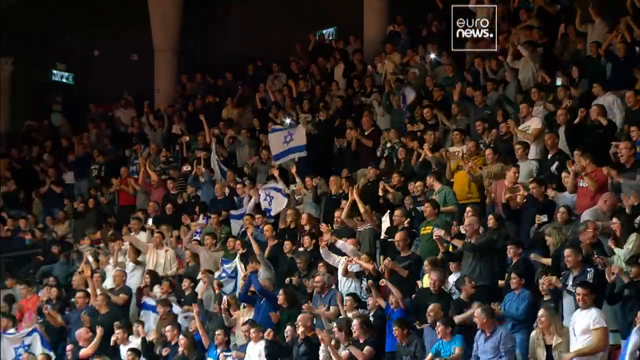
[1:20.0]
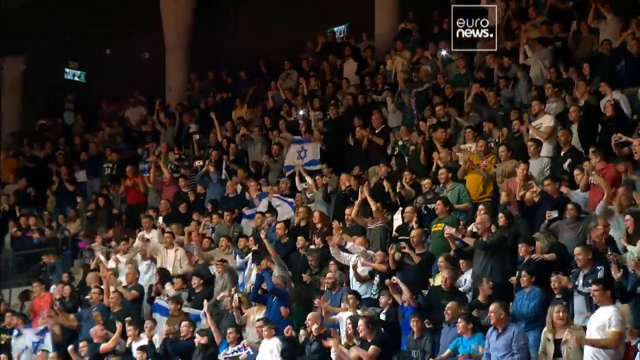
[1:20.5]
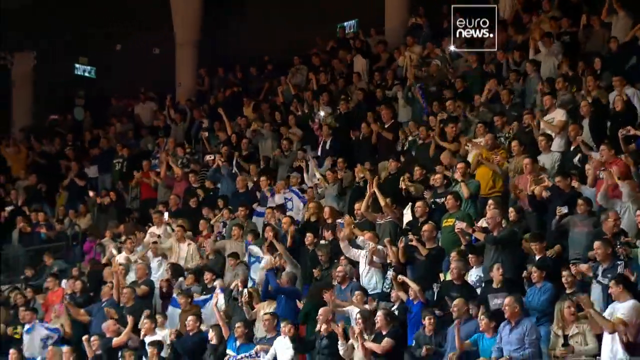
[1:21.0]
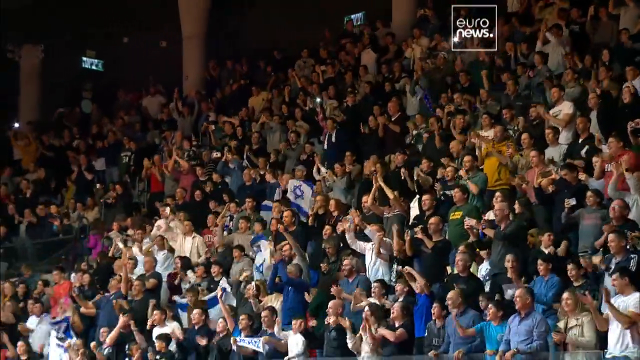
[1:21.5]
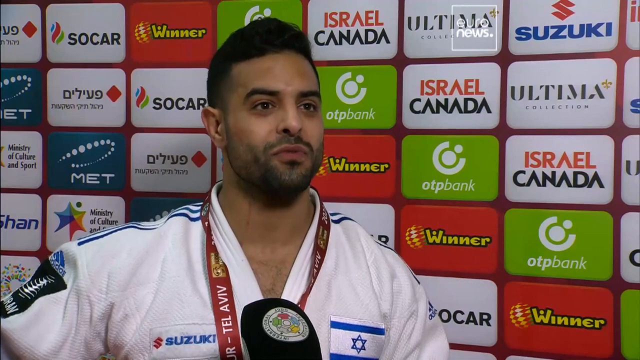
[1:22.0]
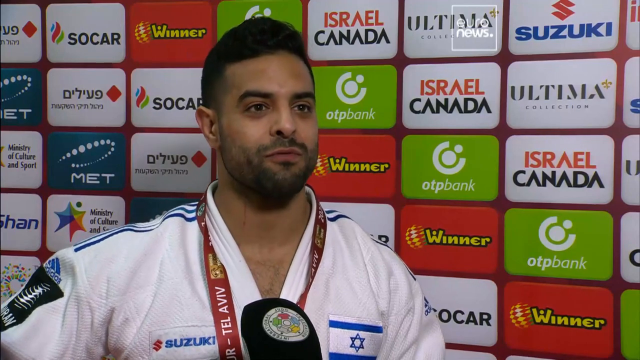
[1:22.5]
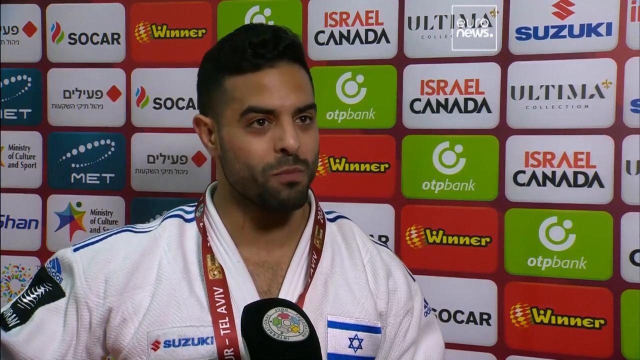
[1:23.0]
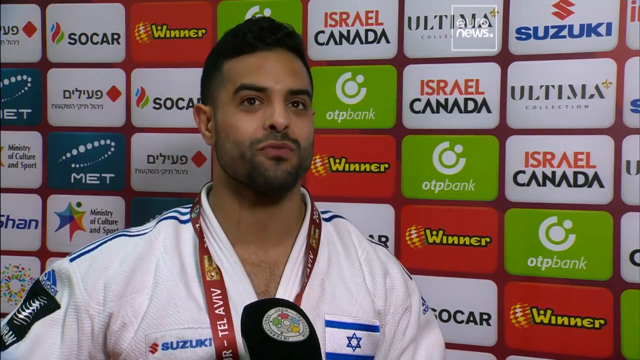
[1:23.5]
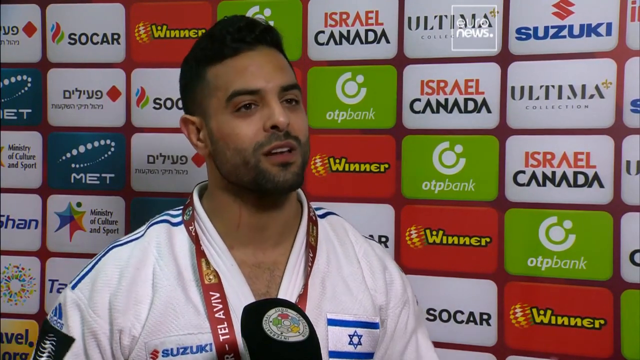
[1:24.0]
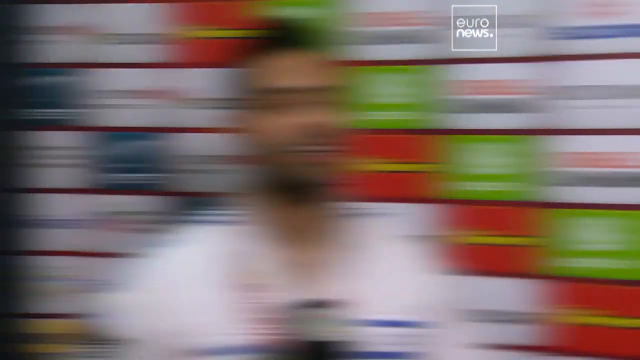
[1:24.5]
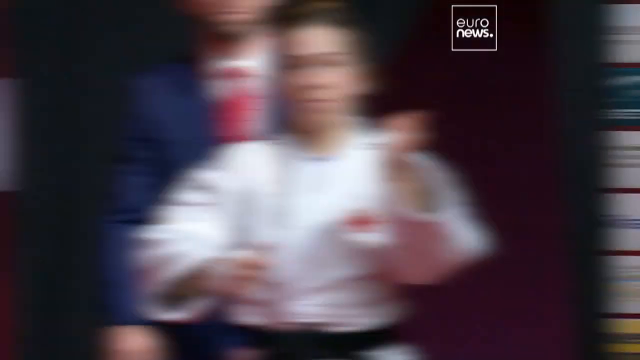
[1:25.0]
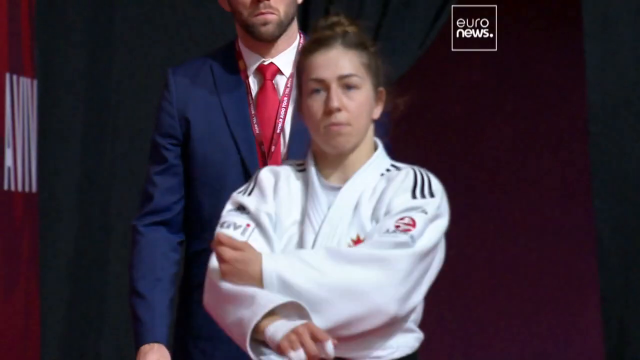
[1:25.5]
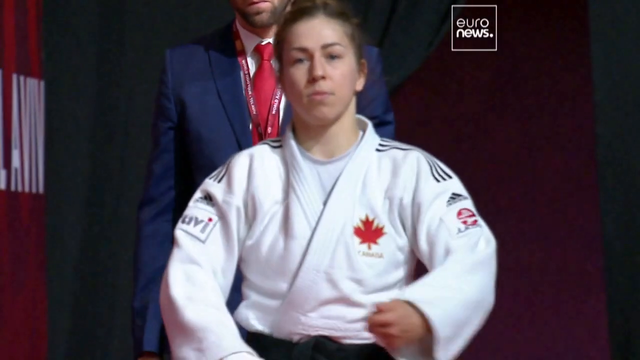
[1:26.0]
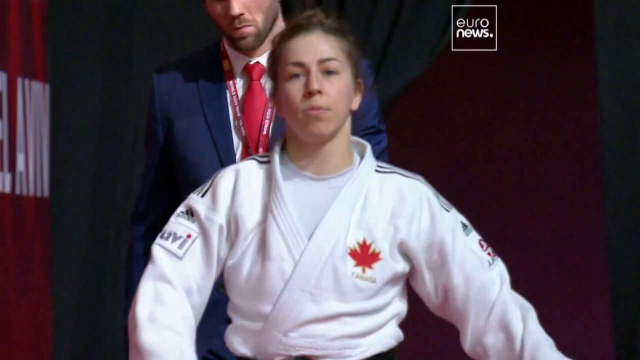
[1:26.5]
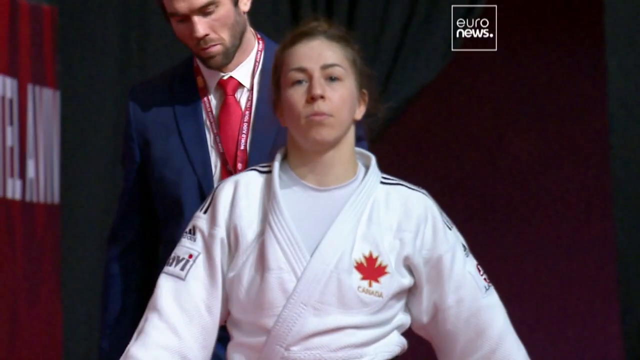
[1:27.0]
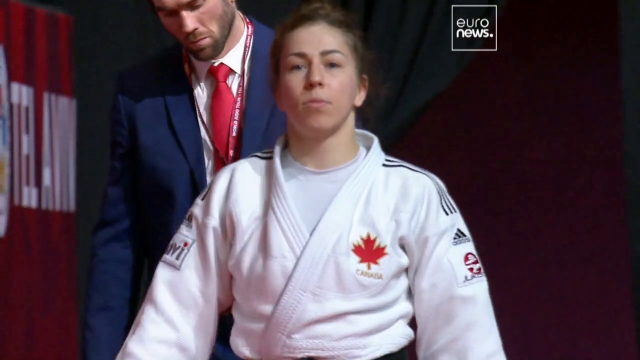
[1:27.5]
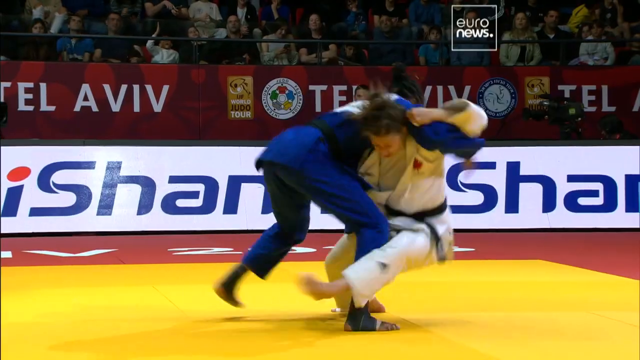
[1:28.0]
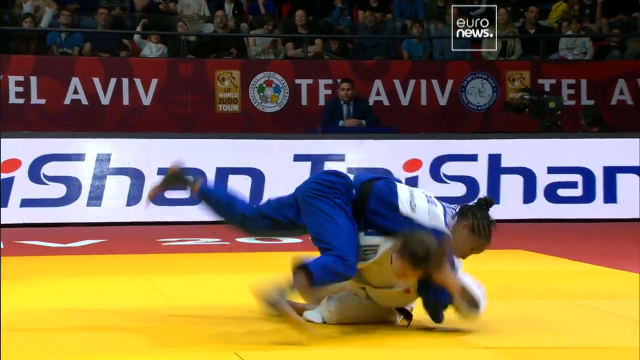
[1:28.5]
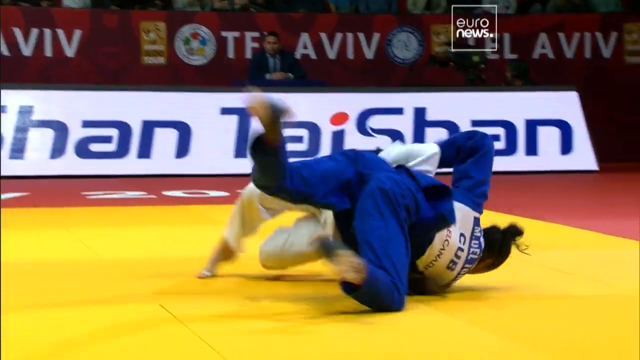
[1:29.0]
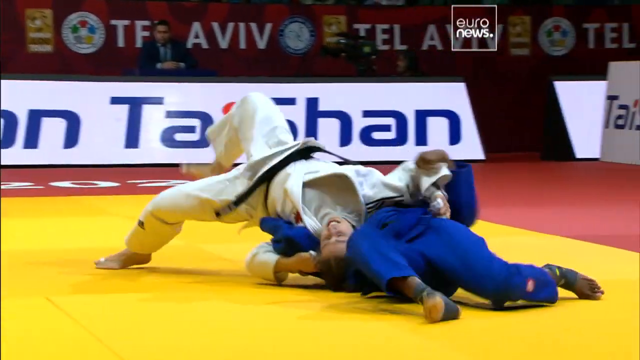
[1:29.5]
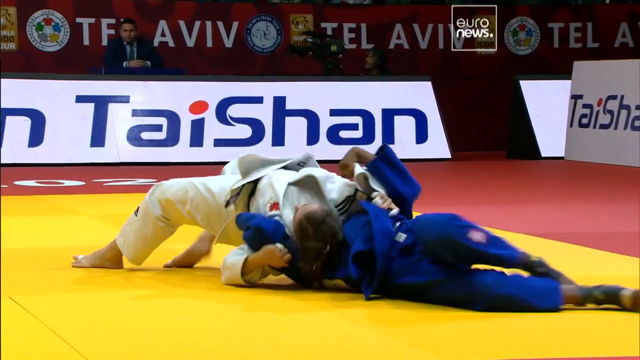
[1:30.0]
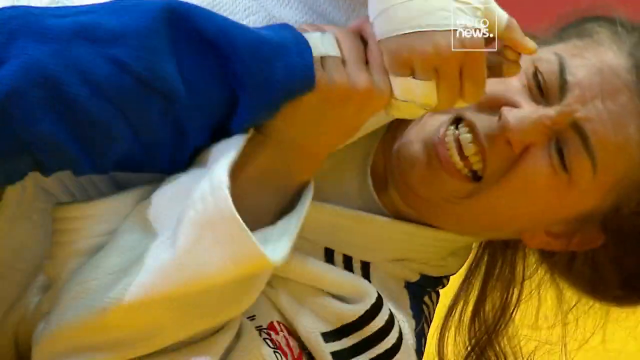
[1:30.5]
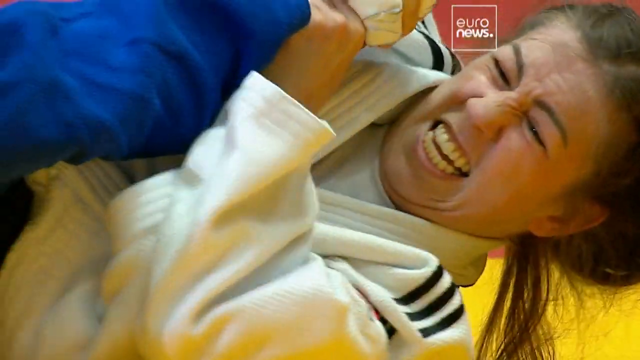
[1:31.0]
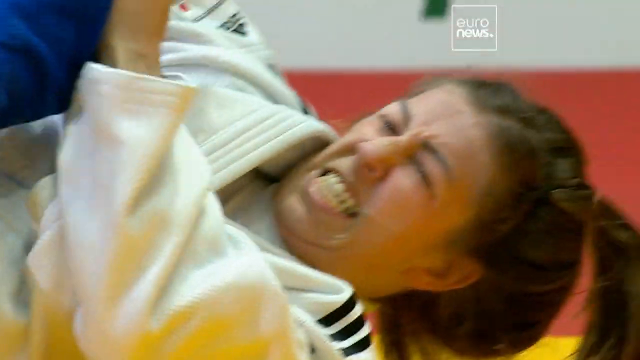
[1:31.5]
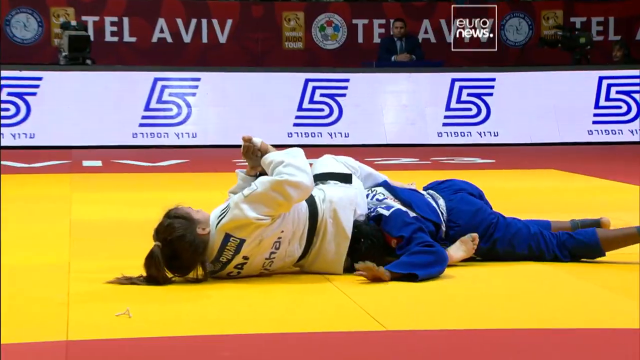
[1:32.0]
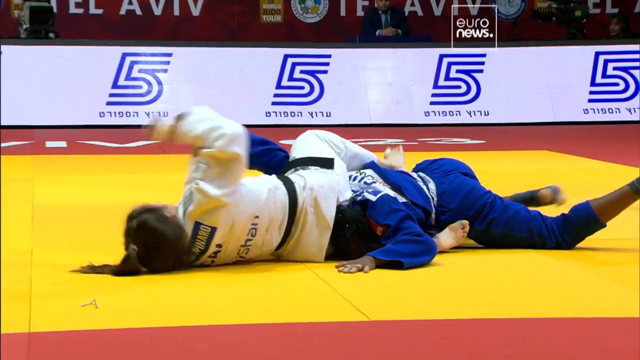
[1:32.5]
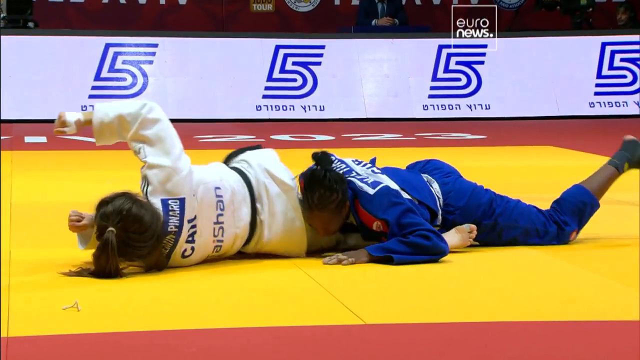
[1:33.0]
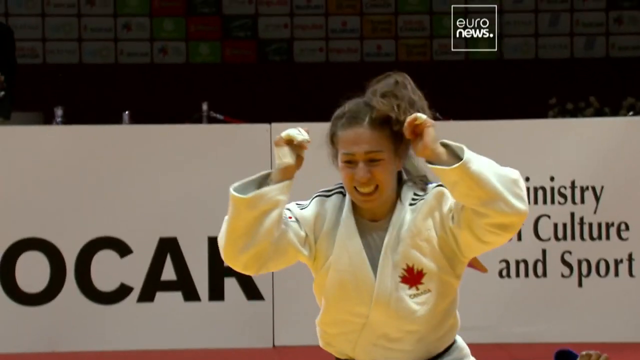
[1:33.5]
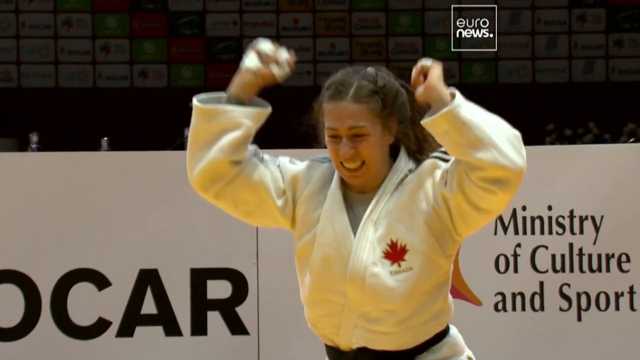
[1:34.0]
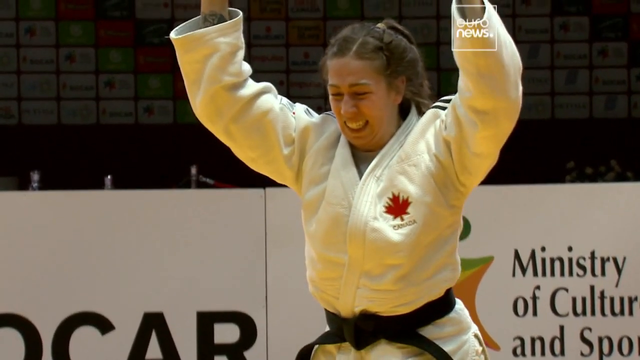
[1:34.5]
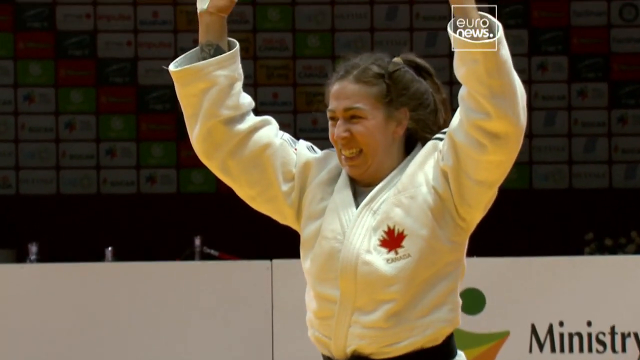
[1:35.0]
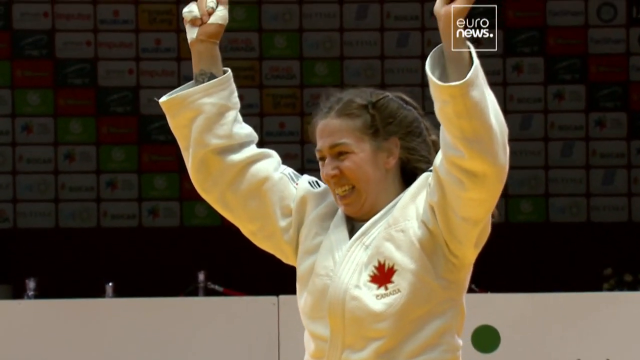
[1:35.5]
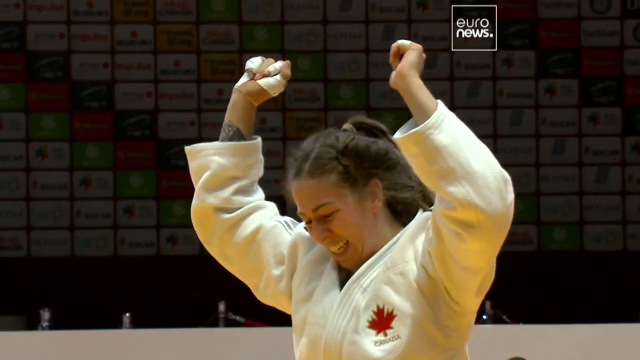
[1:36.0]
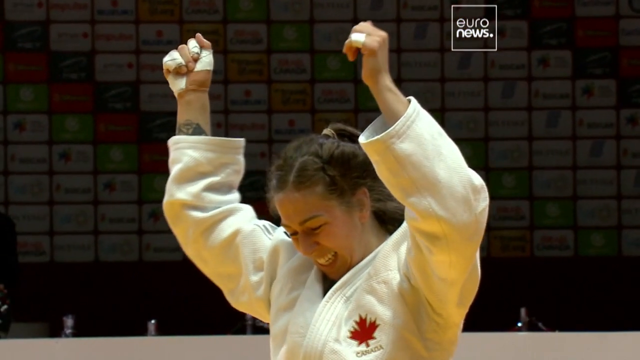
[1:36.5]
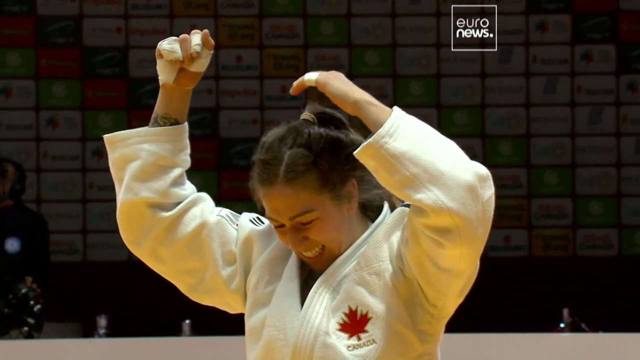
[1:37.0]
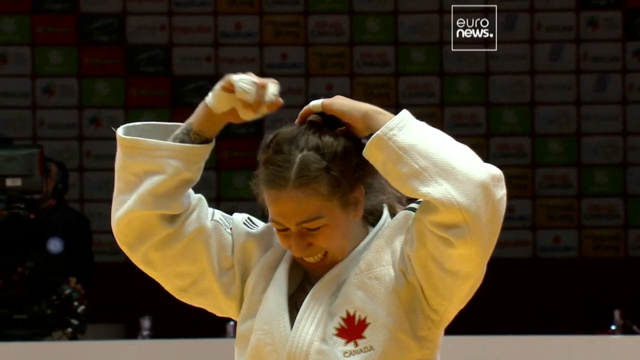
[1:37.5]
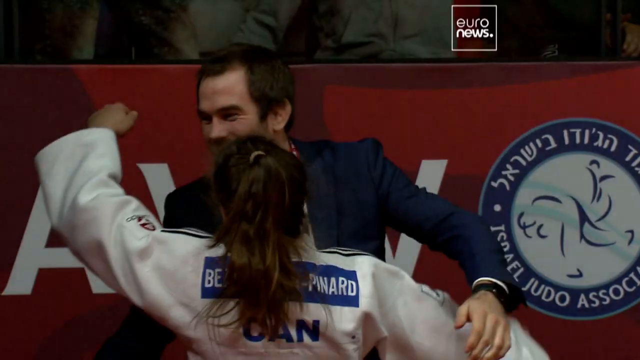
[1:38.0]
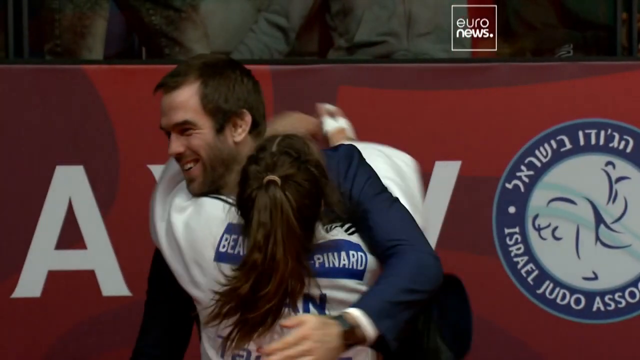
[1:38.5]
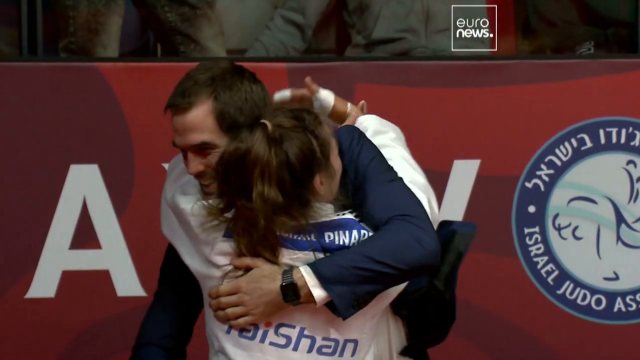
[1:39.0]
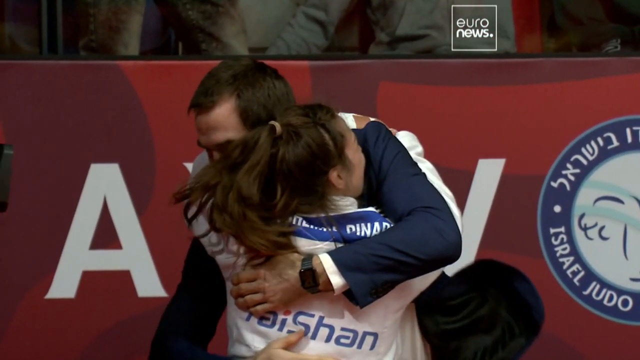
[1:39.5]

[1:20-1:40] A crowd cheers, and the video cuts back to the Israeli judo fighter talking into the microphone. Then a woman appears in what looks like a judo uniform with a red maple leaf and "Canada" on it, apparently a Canadian athlete walking out into an arena. When she first walks out, her brownish hair is in a bun, which then falls loose into a ponytail. She throws an opponent in a blue outfit with "CUB" on the back, apparently Cuban, onto the floor, then stands up and raises her arms in the air, smiling. She hugs a man, possibly her coach; she is wearing a blue suit. She arm-bars the Cuban athlete, a hand taps the ground in what looks like a tap-out, and the Canadian athlete stands up with her arms raised.